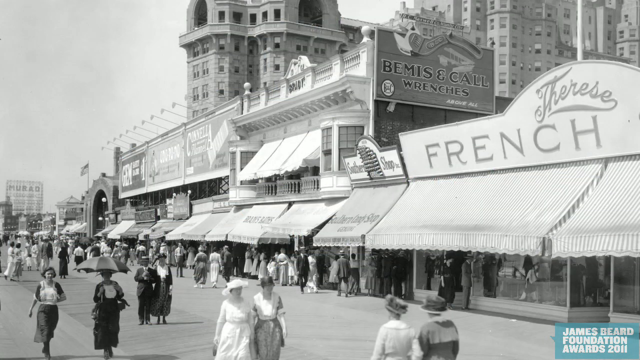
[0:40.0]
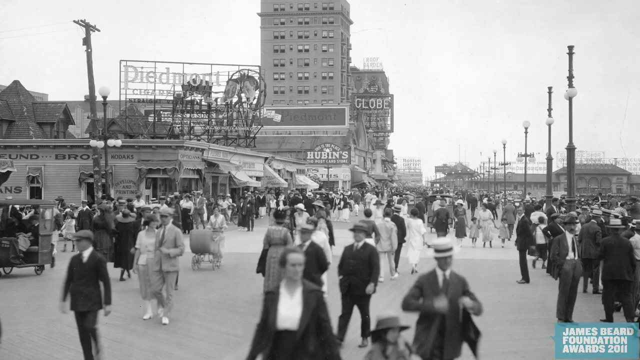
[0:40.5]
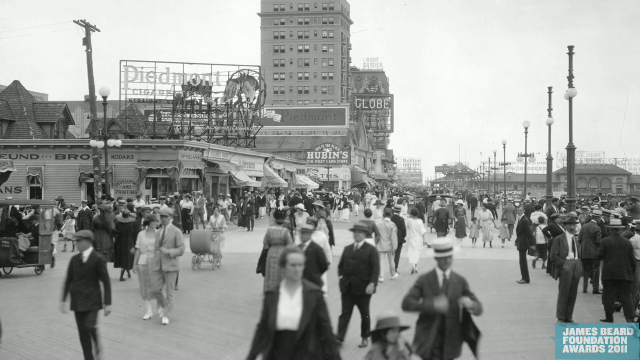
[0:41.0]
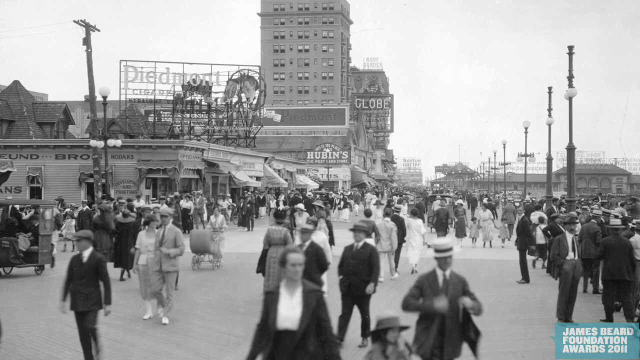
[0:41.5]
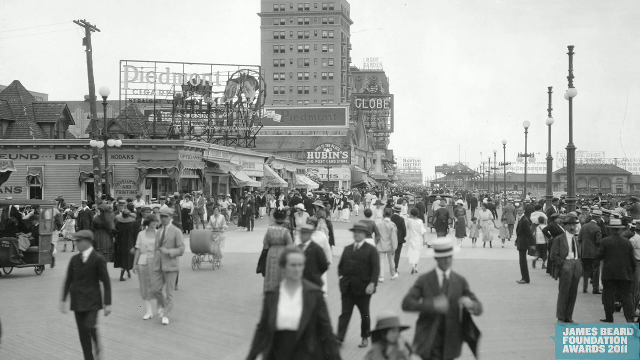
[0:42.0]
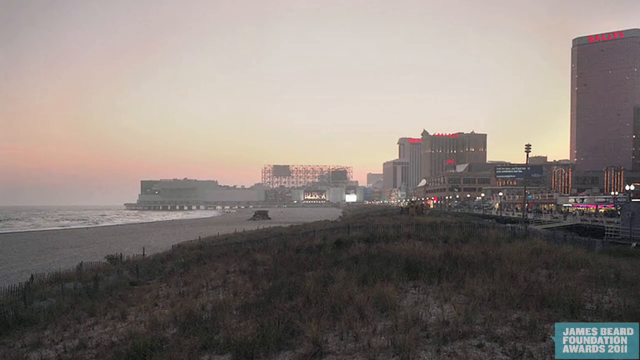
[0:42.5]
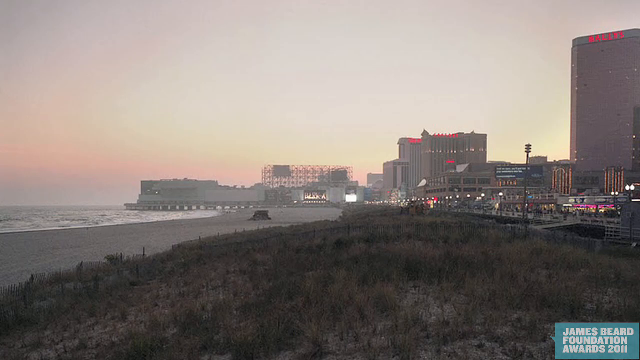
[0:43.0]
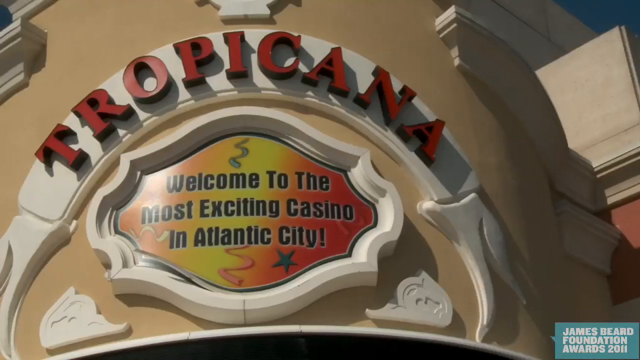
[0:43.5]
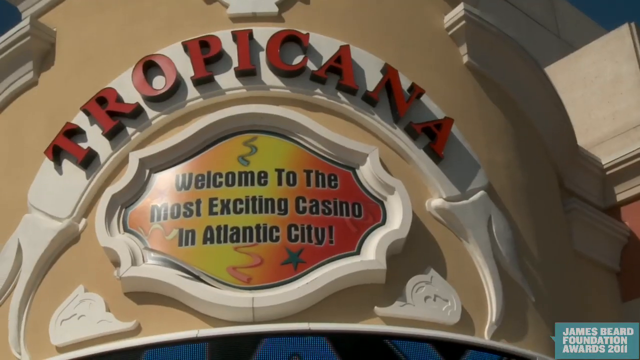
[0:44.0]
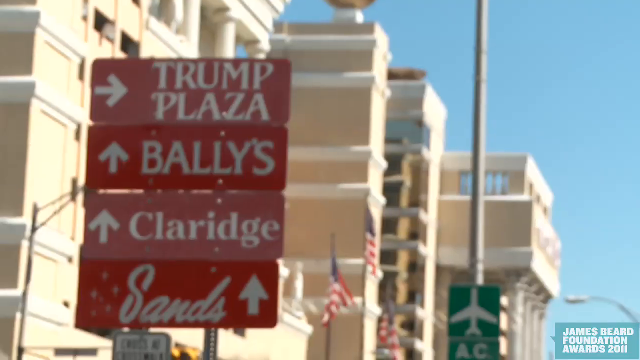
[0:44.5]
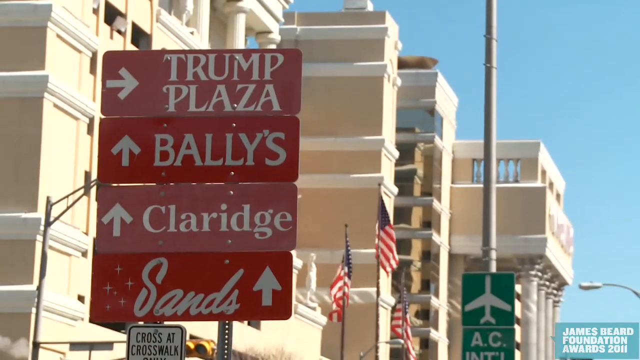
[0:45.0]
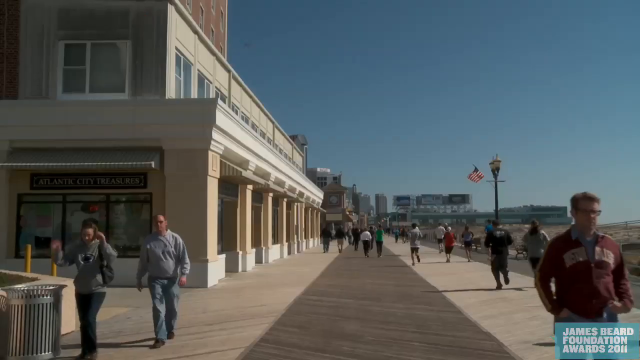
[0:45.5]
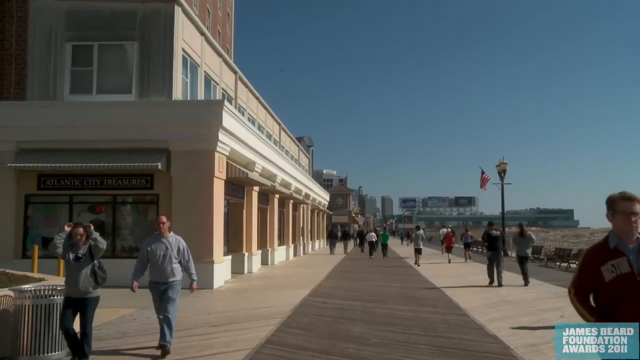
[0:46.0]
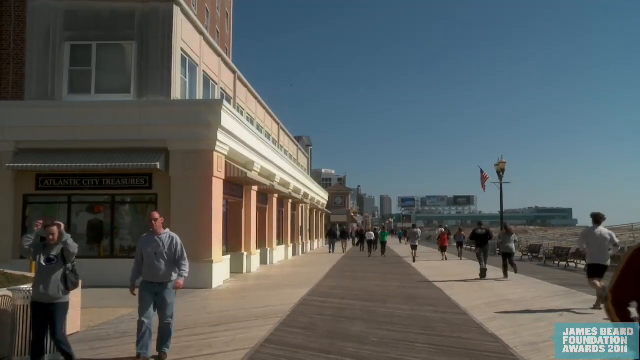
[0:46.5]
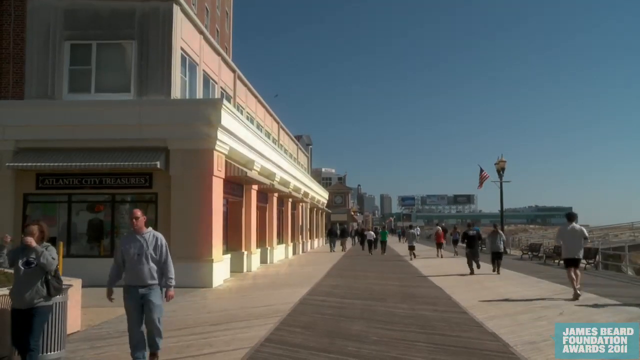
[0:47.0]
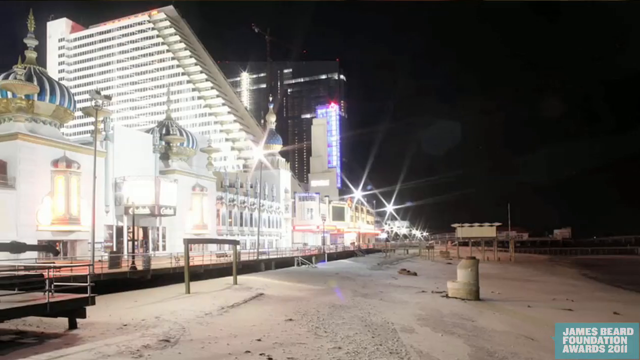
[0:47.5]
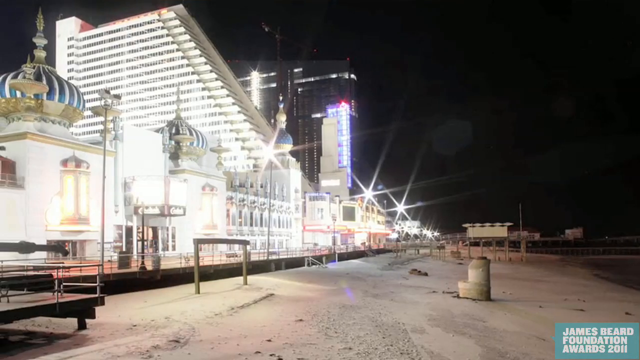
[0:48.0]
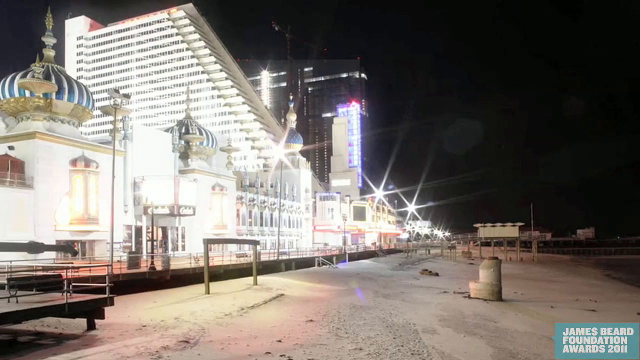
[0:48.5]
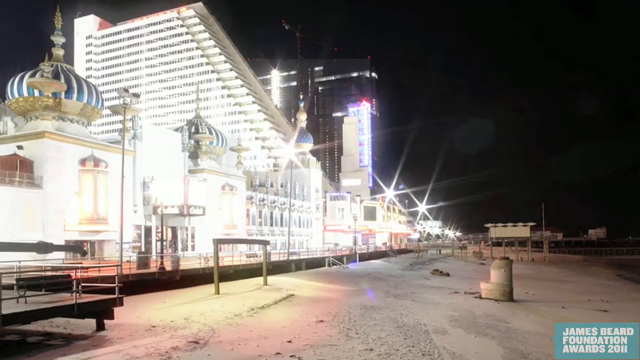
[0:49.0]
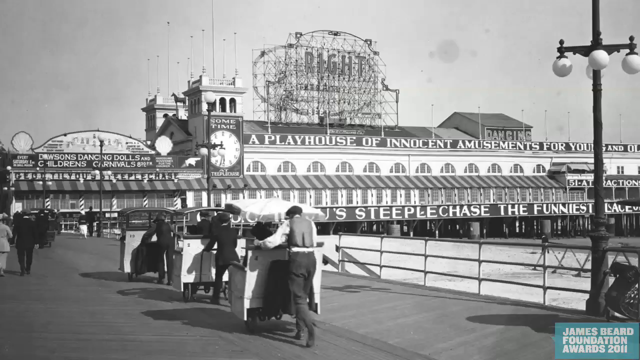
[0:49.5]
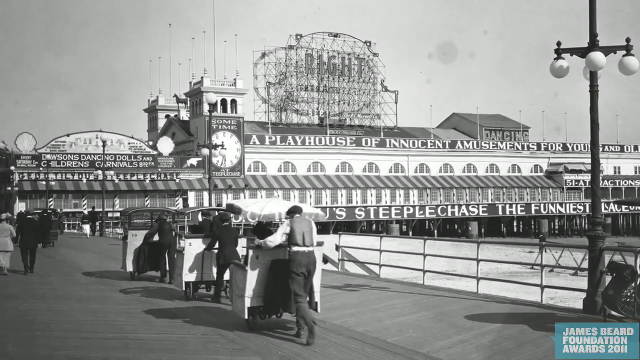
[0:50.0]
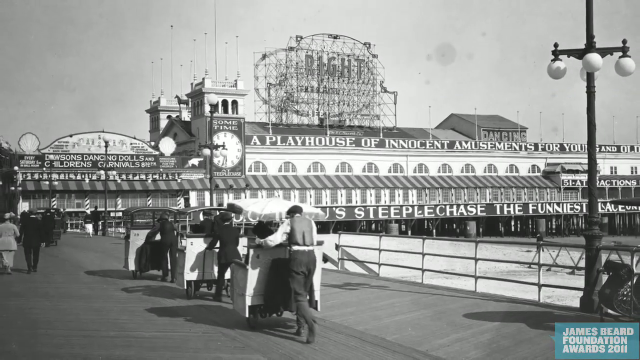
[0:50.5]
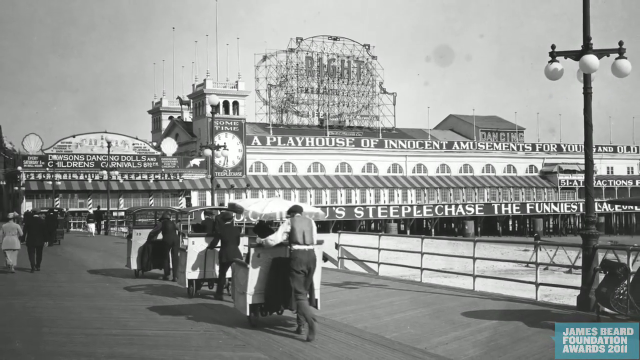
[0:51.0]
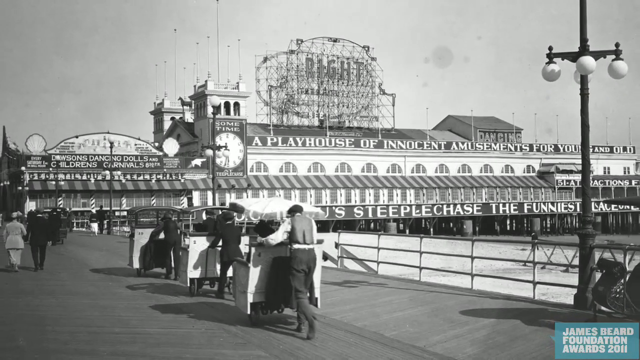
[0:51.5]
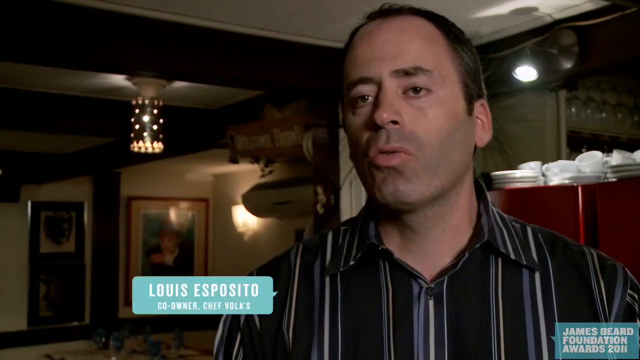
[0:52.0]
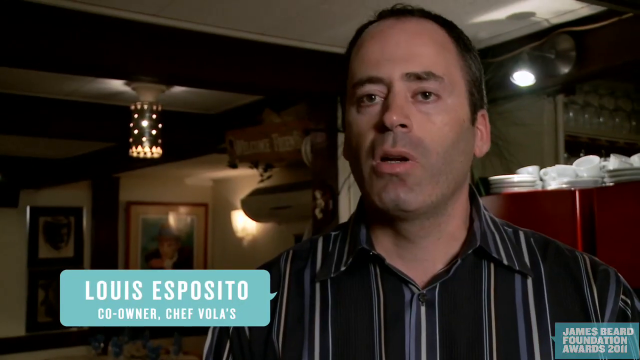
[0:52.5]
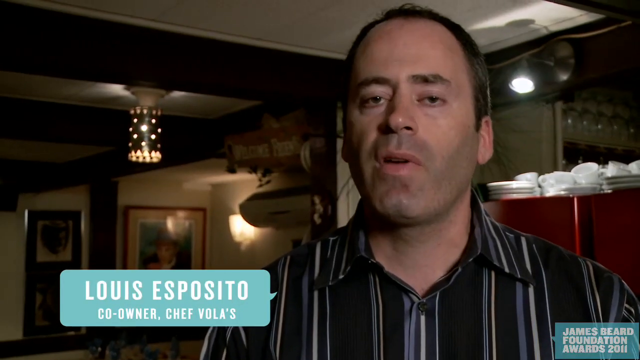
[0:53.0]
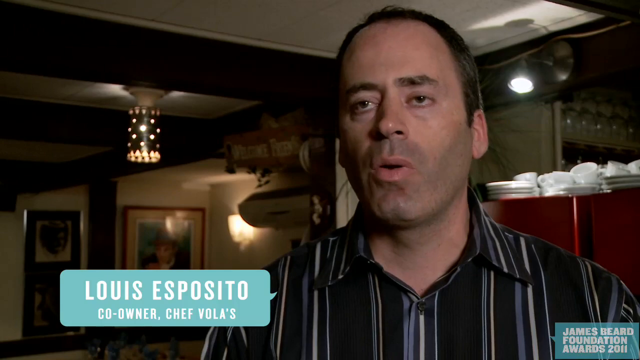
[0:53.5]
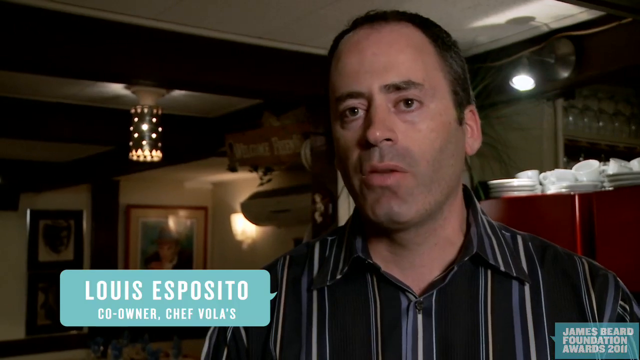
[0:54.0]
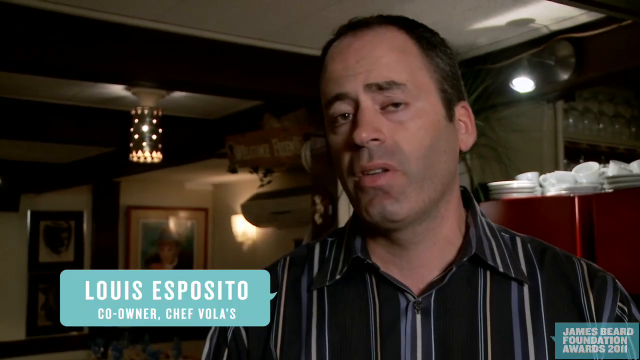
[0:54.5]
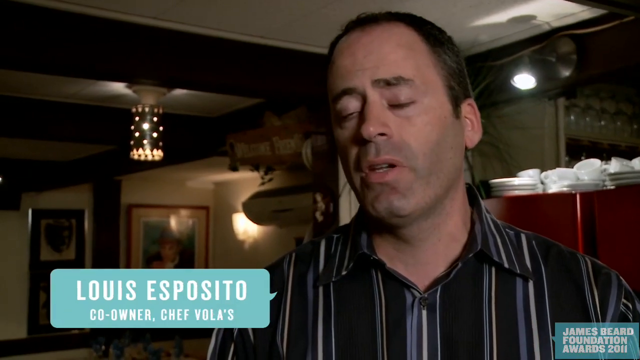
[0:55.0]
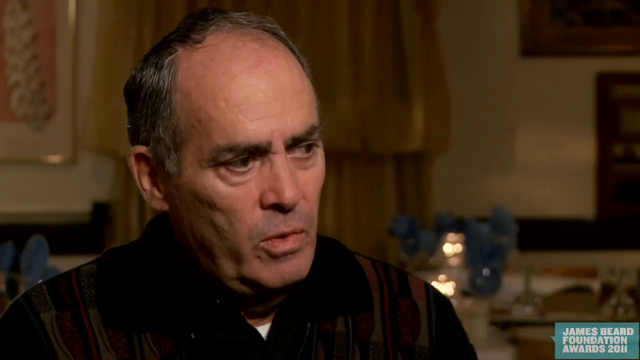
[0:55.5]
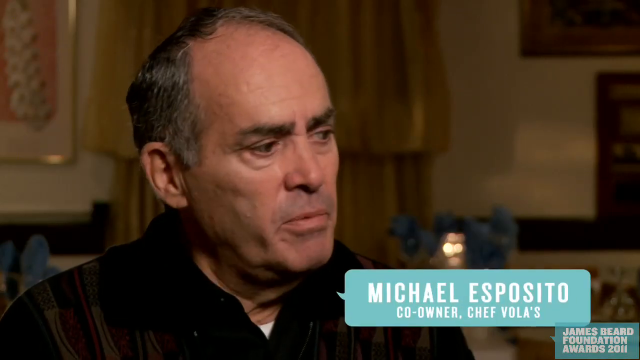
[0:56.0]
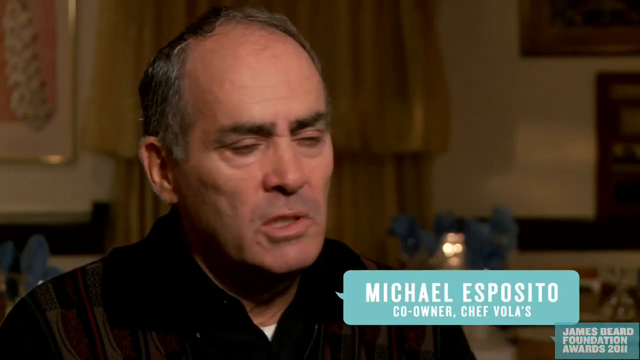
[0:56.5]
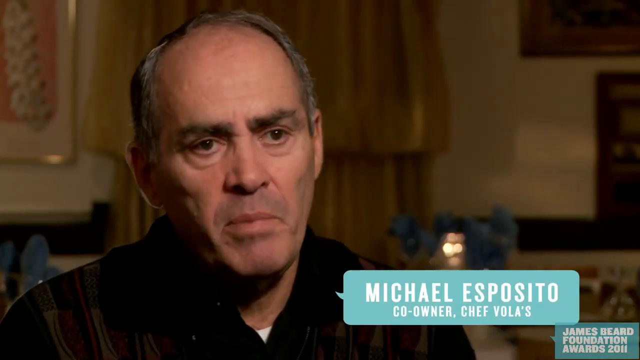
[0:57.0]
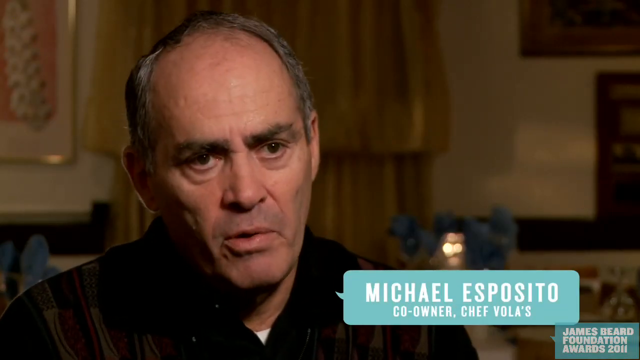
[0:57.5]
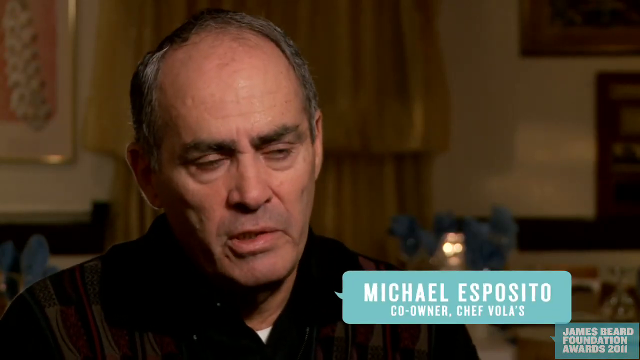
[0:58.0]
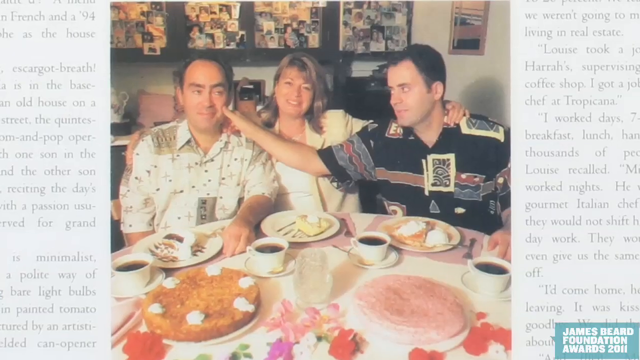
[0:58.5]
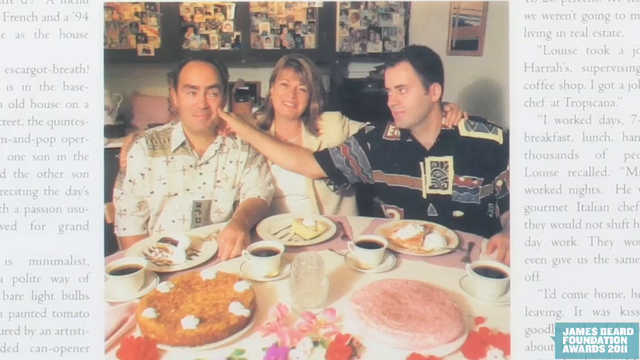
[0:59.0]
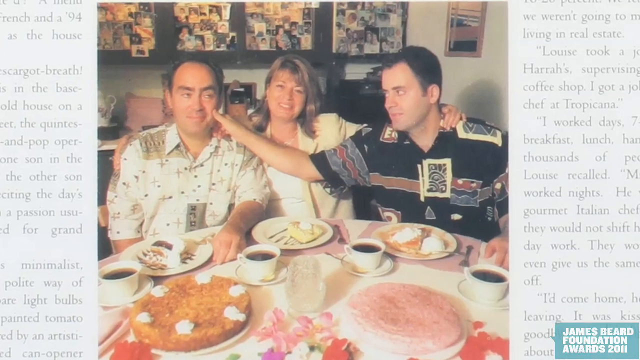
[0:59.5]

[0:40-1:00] The camera zooms into a city where very many people, male and female and including elderly people, are working and moving through the city, with some security lights and a storage building in front of the close-up. The setting changes to an aerial view of a city beside a water body, like a city built on a beach. A banner and logo read "Tropico" and "Welcome to the most exciting casino in Atlantic City." A direction sign shows Trump Plaza, Bellis and Claridge. A few people are seen running along several storage buildings. The camera then focuses on another building at night with a lot of lighting on it, and then on another location where the inscription "a playhouse of innocent amusements for you" is written on decorated buildings, shown in black and white. A man named Michael Esparito then appears on screen, giving an explanation.